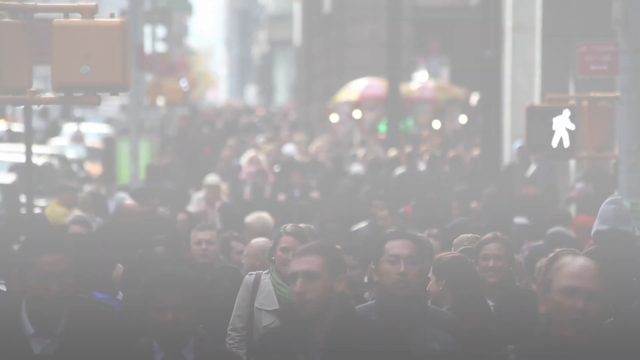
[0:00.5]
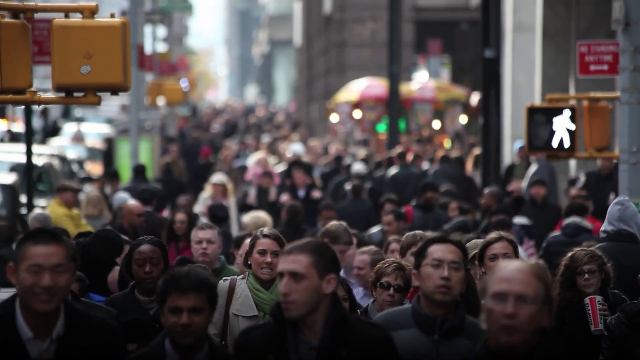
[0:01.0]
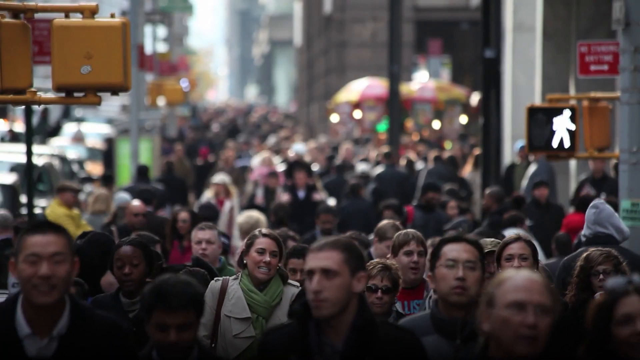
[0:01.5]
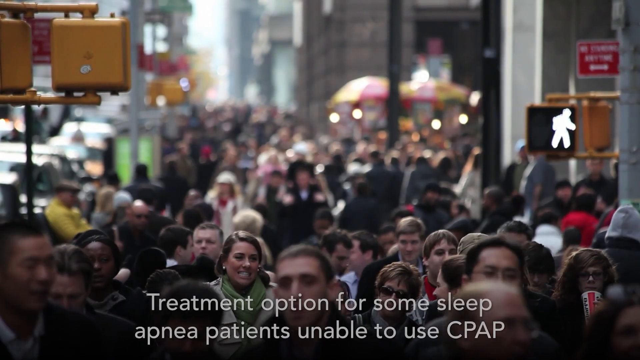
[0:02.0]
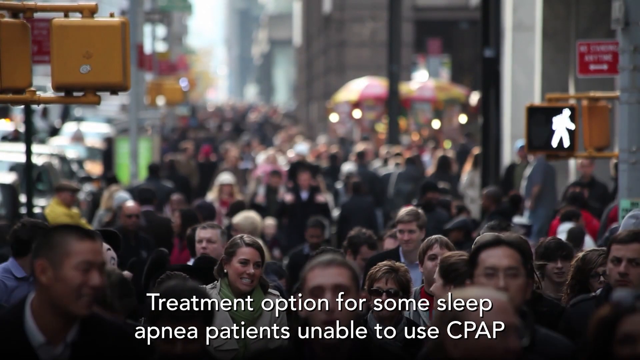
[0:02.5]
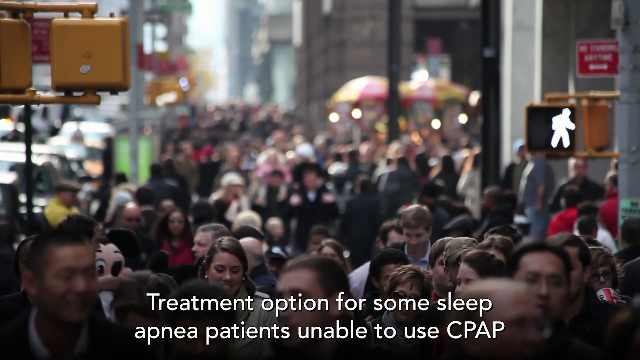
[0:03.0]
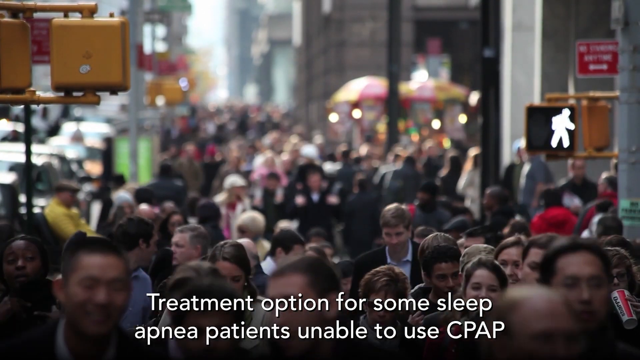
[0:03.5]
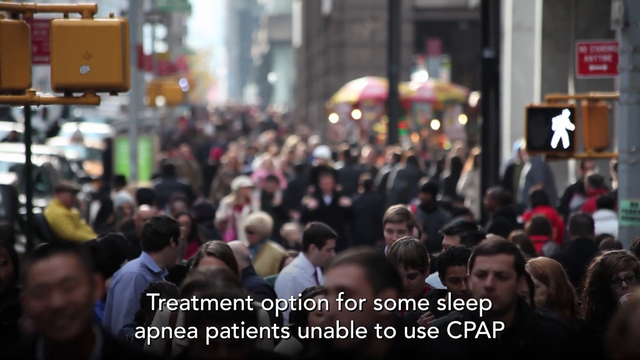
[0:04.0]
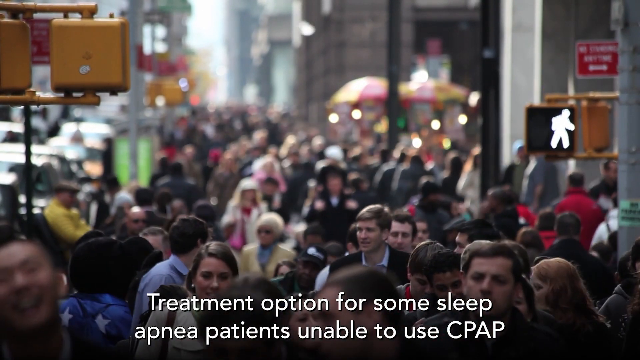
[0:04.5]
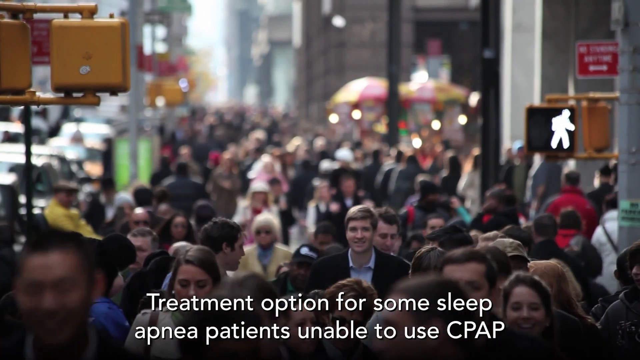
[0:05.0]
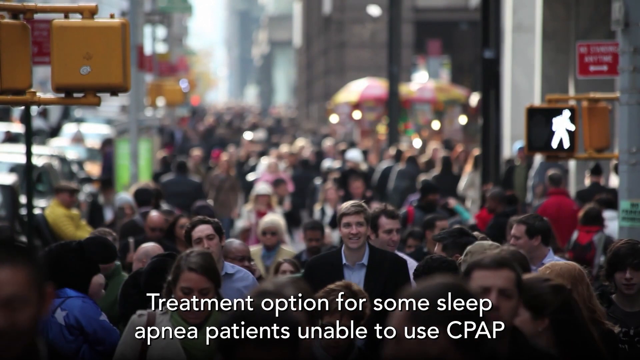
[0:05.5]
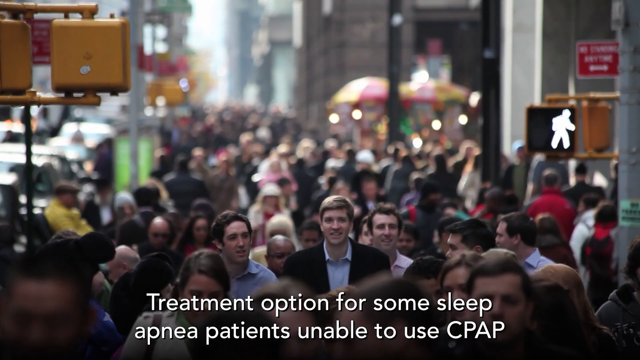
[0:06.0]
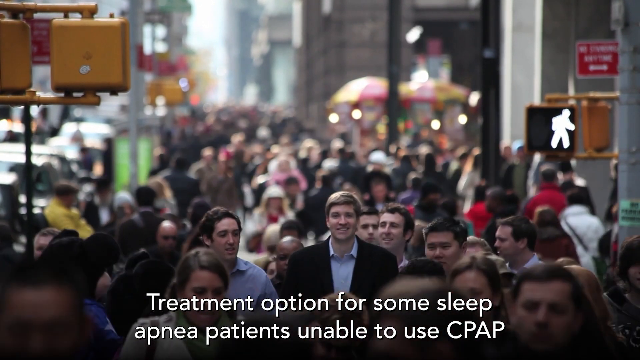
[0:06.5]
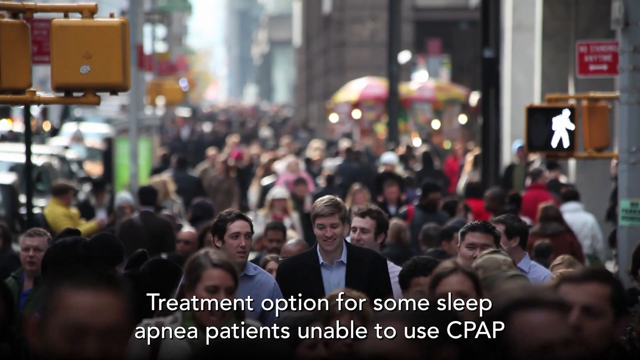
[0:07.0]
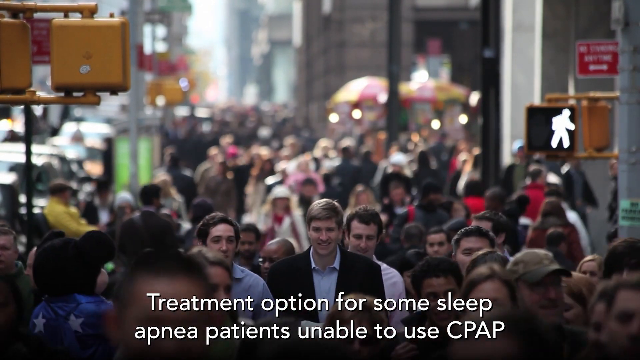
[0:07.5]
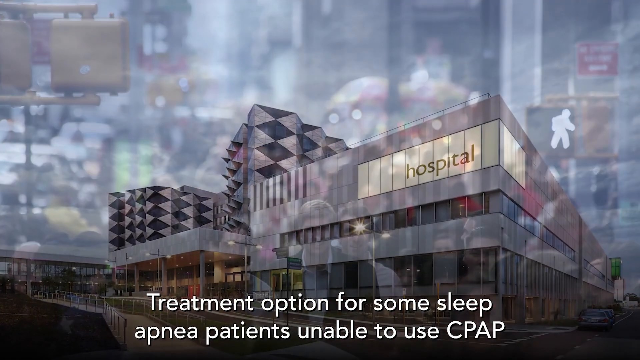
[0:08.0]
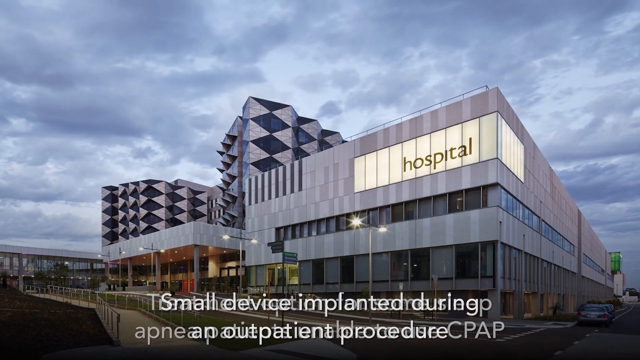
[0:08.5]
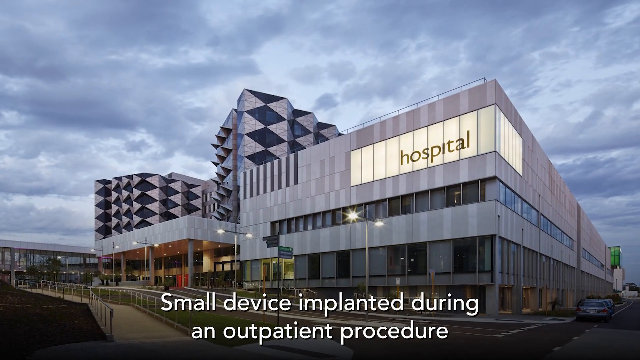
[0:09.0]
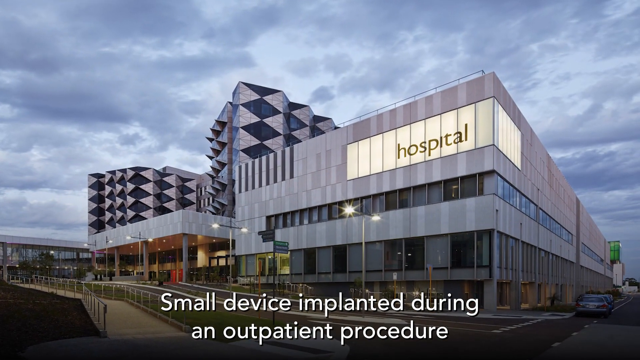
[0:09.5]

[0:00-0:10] The video fades into a shot of a path, looking at the street of a bustling city at what looks like a busy time, possibly when people are commuting between places. Text at the bottom of the screen reads "treatment option for some sleep apnea patients unable to use CPAP, small device implanted during an outpatient procedure." Judging from the architectural design of the streets, the place looks like it could be America, and there are some stalls where food is probably sold as street food. When the text mentions a small device implanted, the background changes to the outside of a hospital. The hospital is white, one part of it is a bit taller, and there are geometric patterns along the outskirts of the wall.